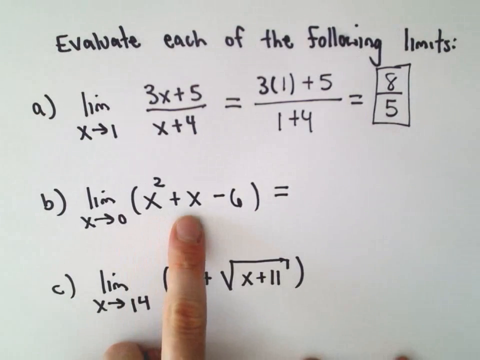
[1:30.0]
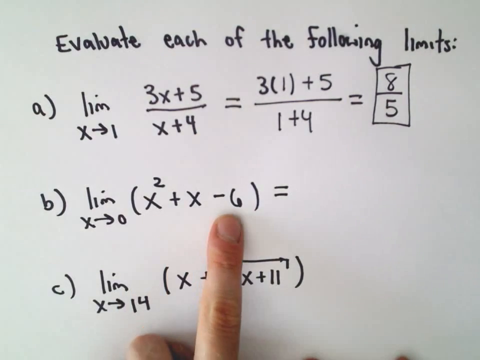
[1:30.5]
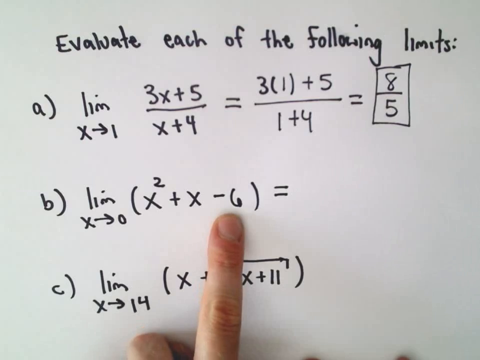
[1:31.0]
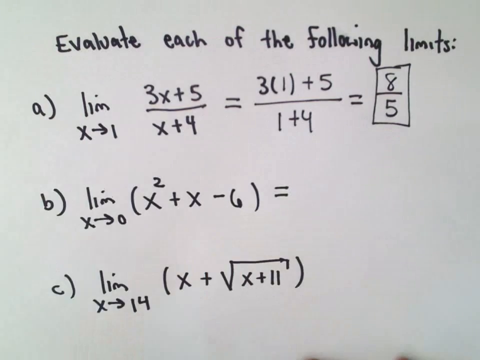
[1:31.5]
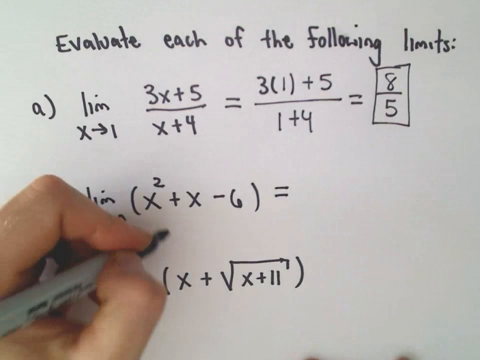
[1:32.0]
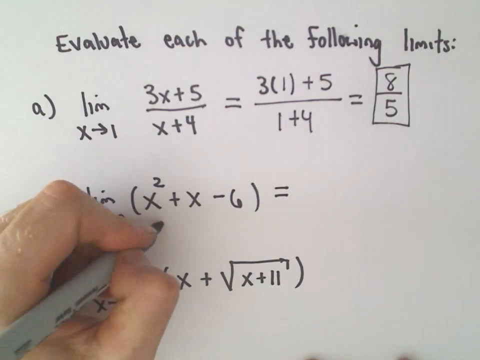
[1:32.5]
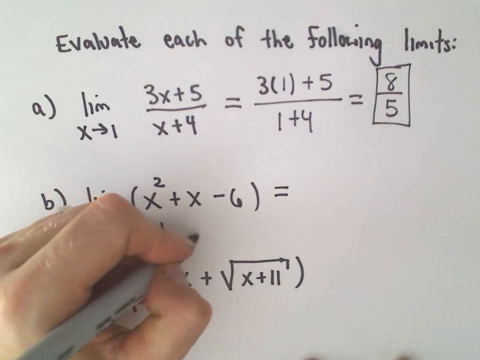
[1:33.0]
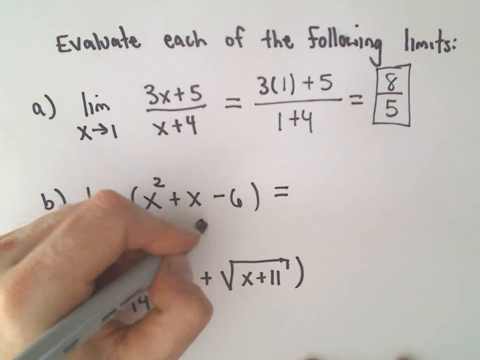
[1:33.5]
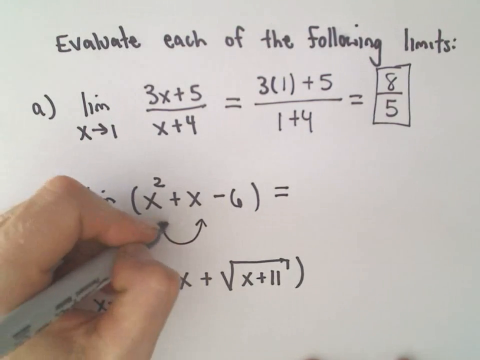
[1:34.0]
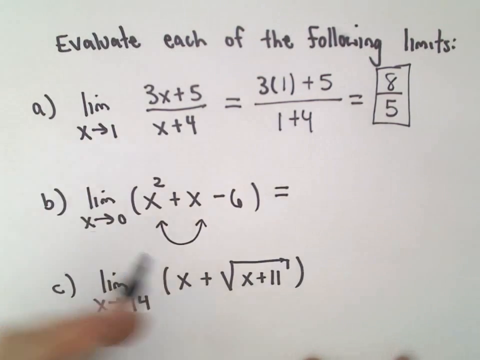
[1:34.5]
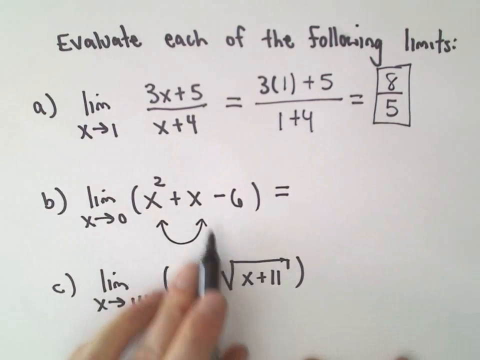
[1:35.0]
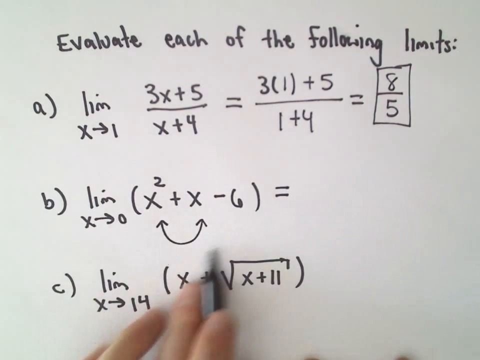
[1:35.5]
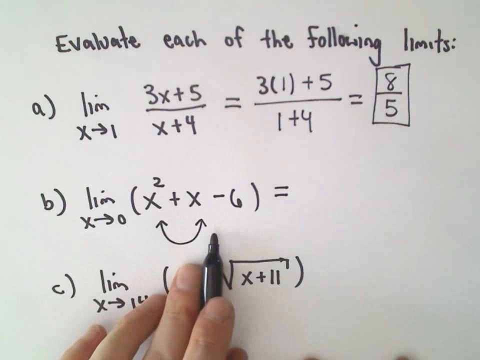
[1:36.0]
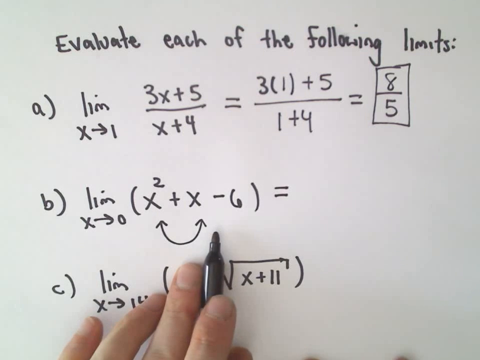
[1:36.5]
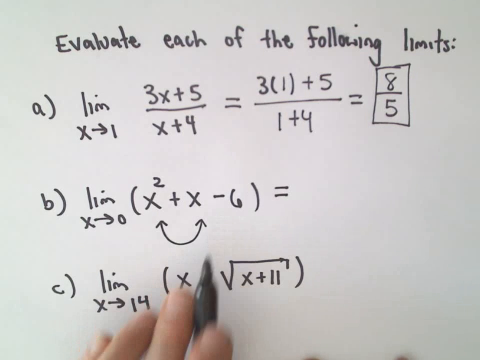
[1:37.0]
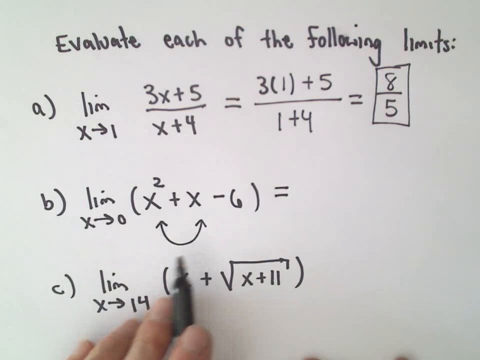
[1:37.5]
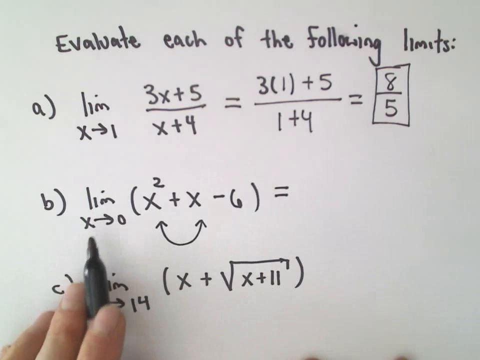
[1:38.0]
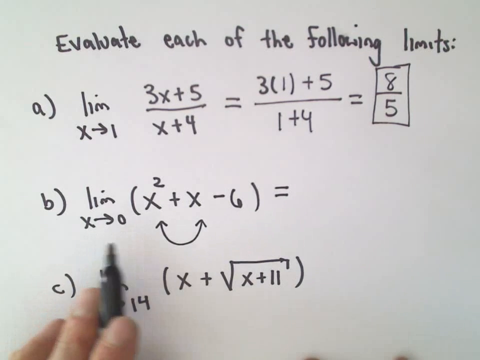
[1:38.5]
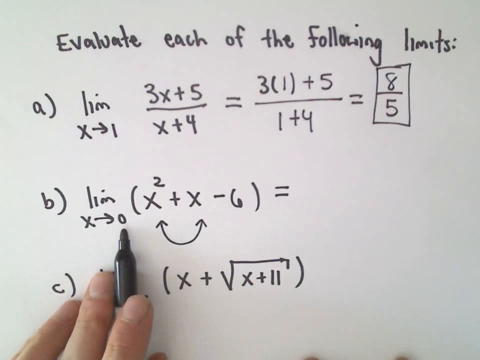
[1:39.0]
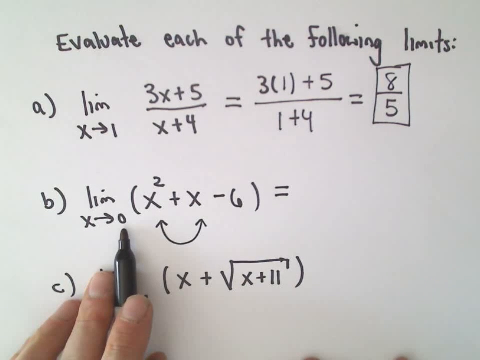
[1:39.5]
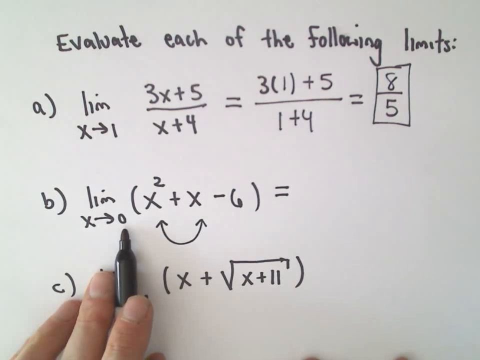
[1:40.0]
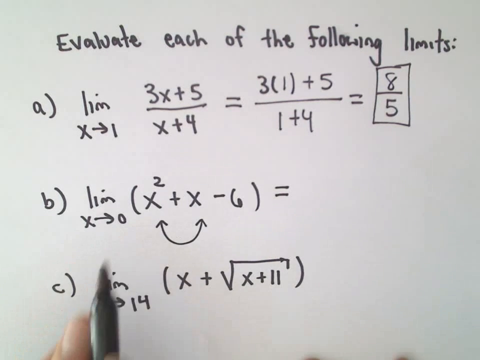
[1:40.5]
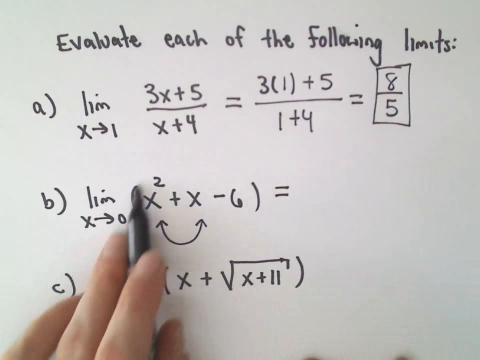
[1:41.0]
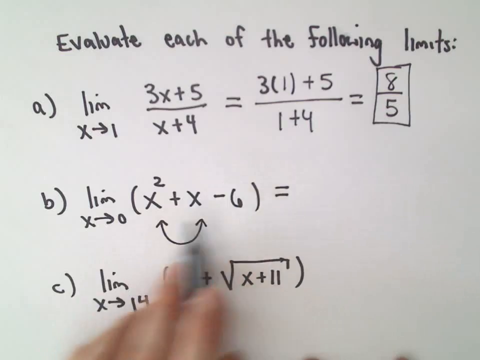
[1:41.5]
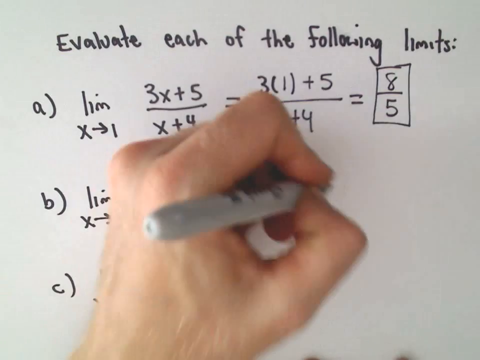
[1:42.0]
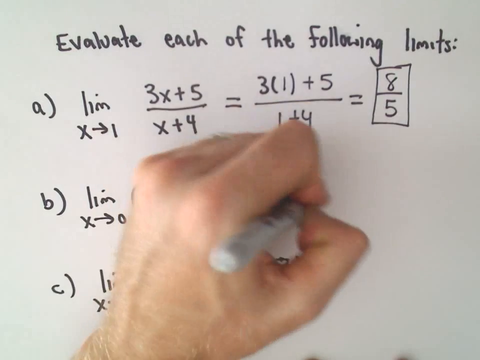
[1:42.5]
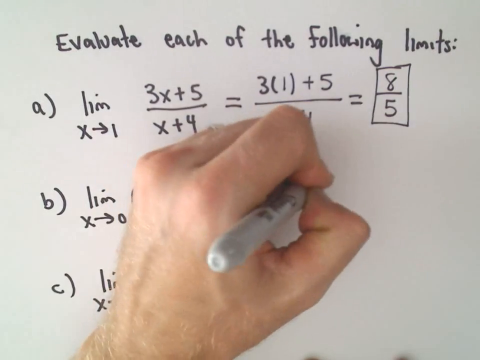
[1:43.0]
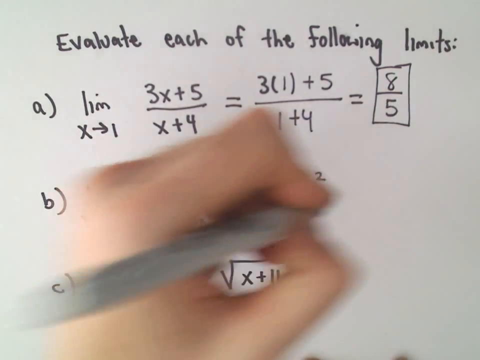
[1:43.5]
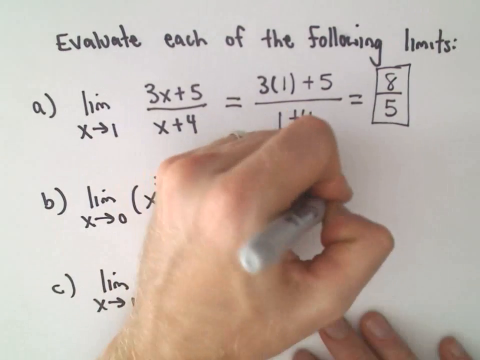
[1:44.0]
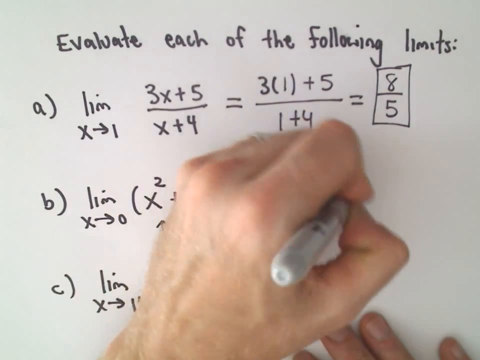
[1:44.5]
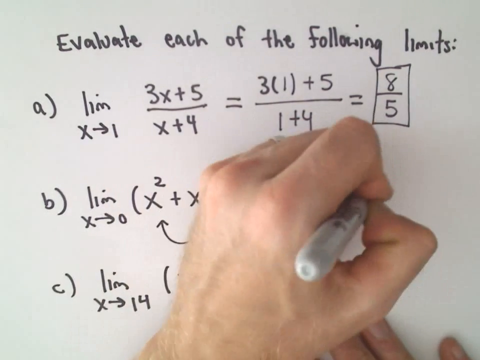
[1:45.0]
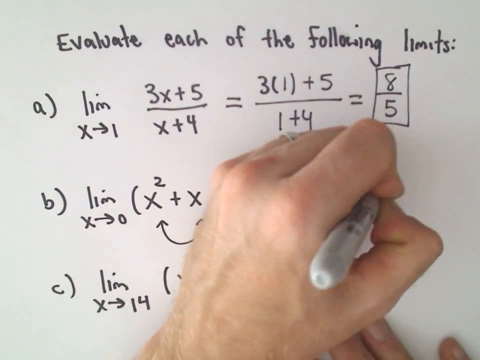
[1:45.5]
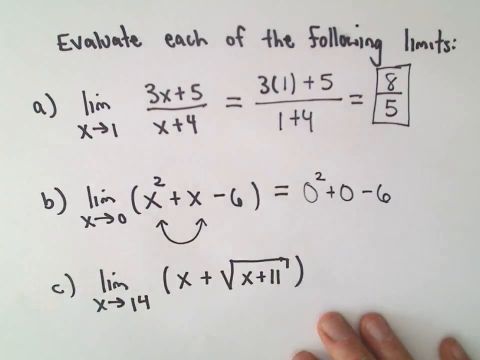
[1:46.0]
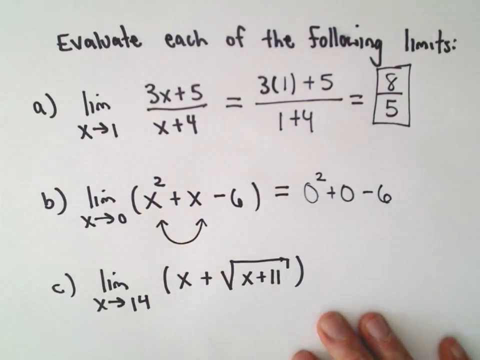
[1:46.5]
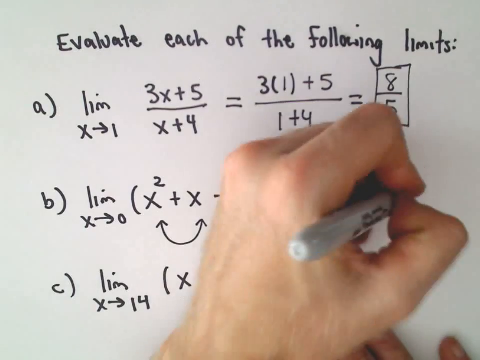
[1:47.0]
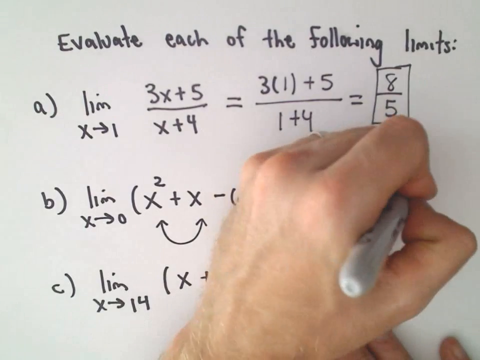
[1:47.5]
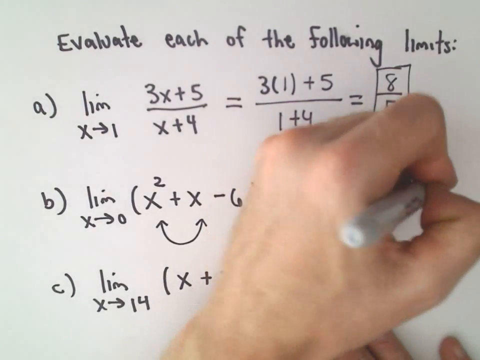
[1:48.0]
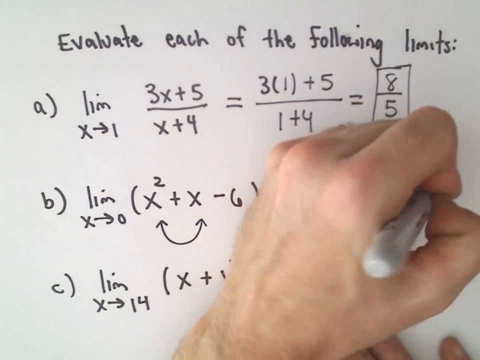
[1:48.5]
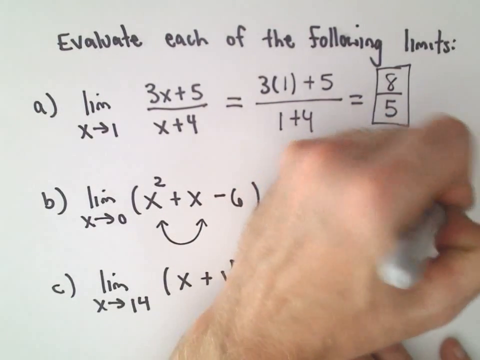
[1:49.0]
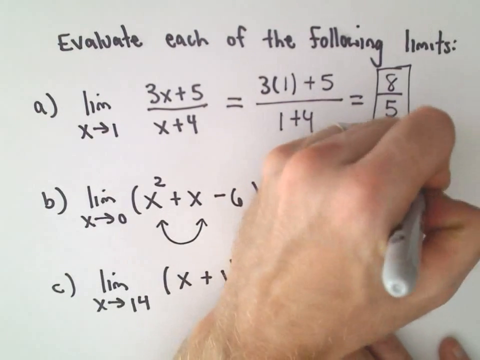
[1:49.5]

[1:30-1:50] The man's finger points to equation B. He points at the x squared and the x and draws an arrow, perhaps to show bringing them together. He then uses the sharpie to point out the limit as x approaches 0, moves the sharpie to the left, and begins writing. During a brief pause, his writing is visible: 0 squared plus 0 squared minus 6. He then appears to write something else on the far left of the paper, though what he writes is unclear and not visible. The video is clear and the camera remains steady; only the paper, which shifts every so often, and the man's writing hands move.